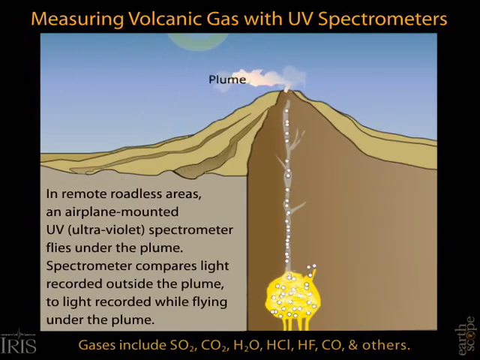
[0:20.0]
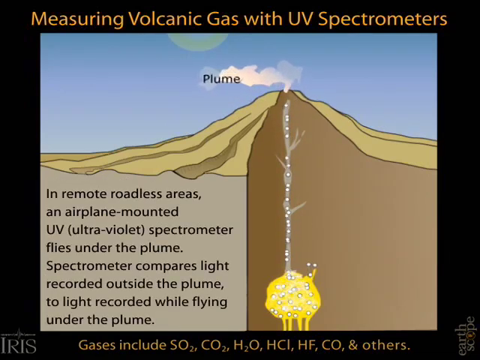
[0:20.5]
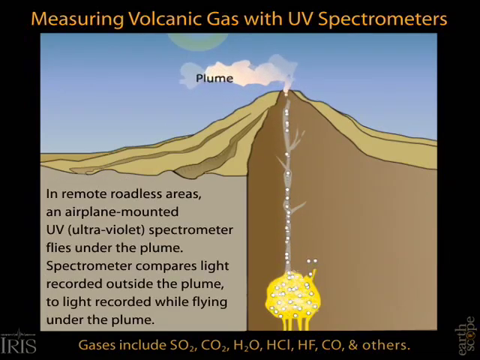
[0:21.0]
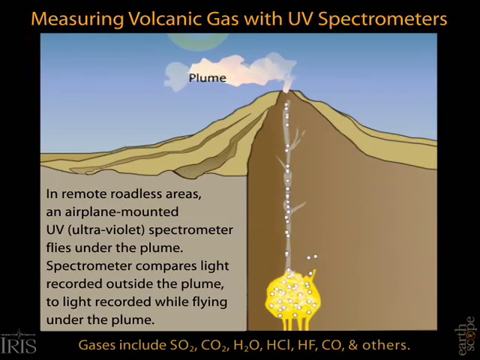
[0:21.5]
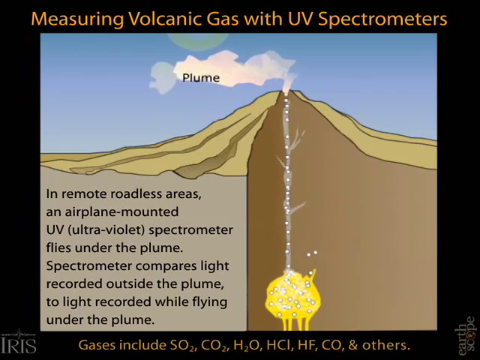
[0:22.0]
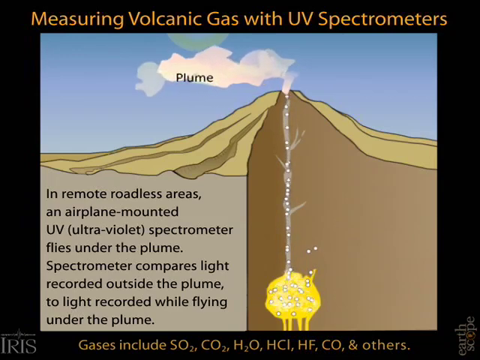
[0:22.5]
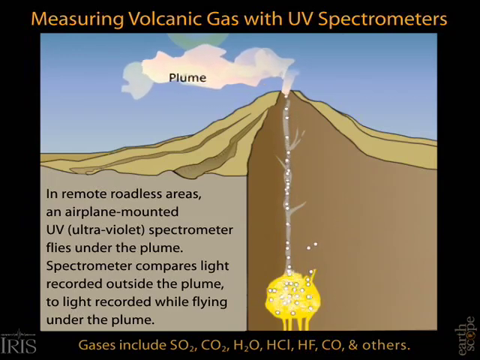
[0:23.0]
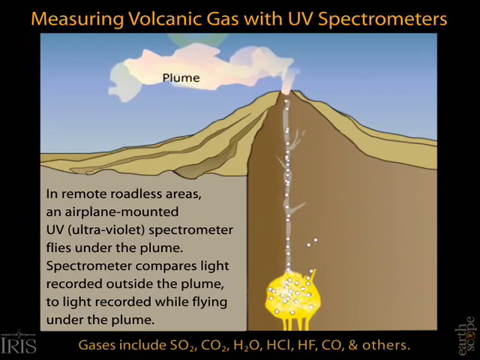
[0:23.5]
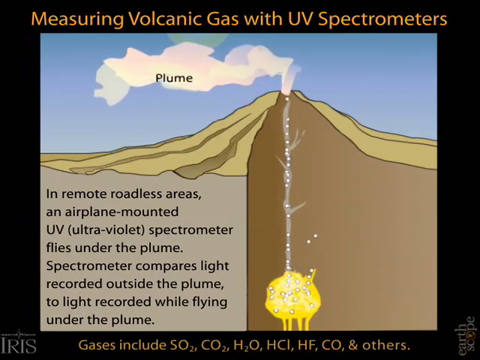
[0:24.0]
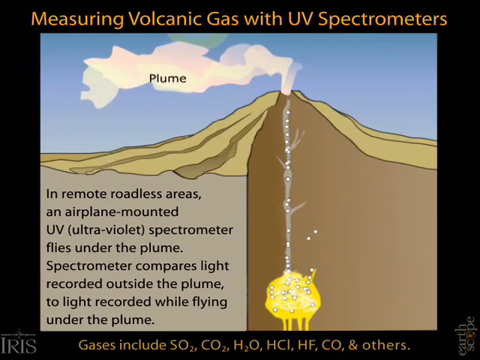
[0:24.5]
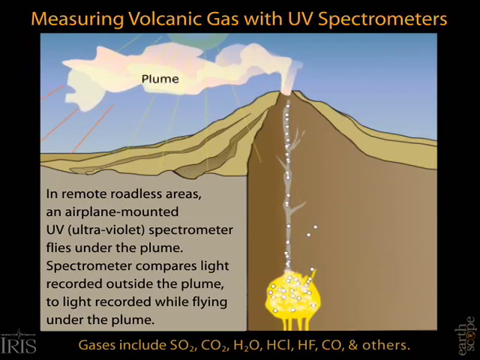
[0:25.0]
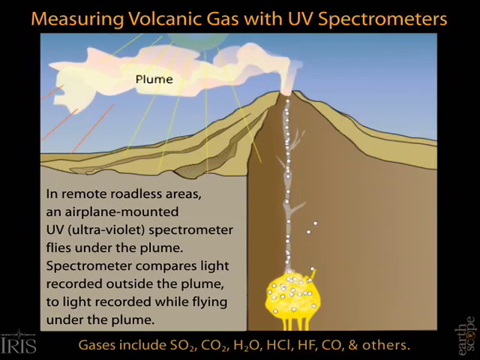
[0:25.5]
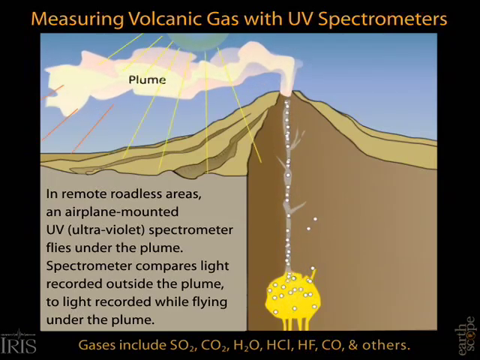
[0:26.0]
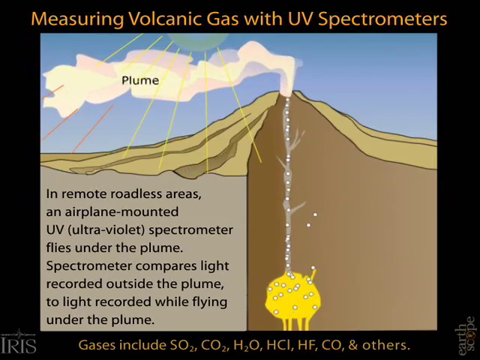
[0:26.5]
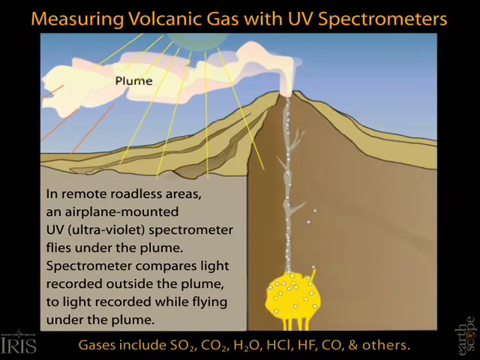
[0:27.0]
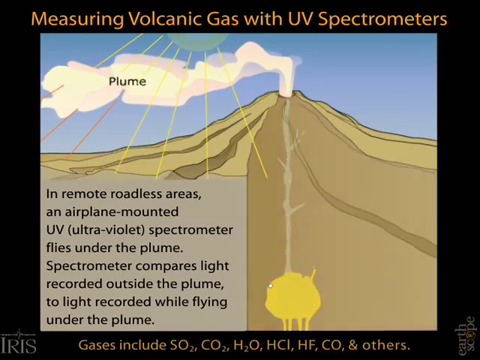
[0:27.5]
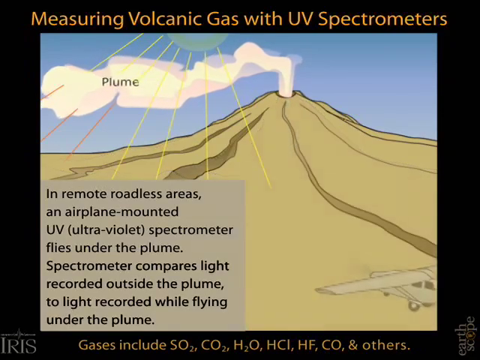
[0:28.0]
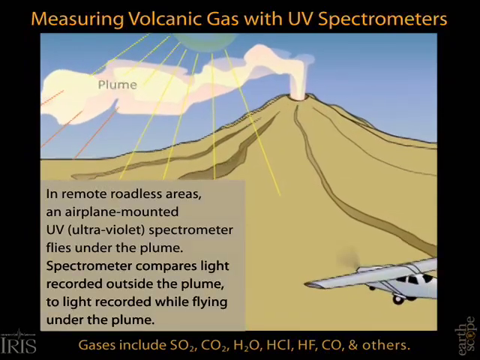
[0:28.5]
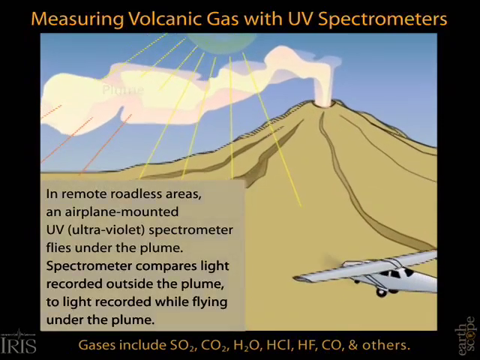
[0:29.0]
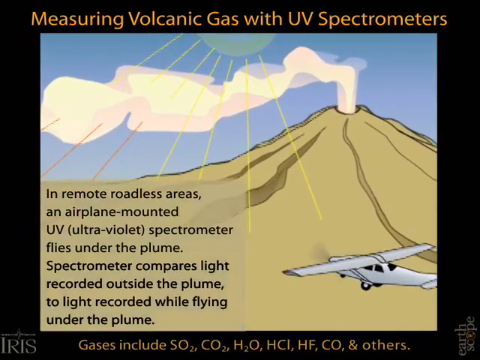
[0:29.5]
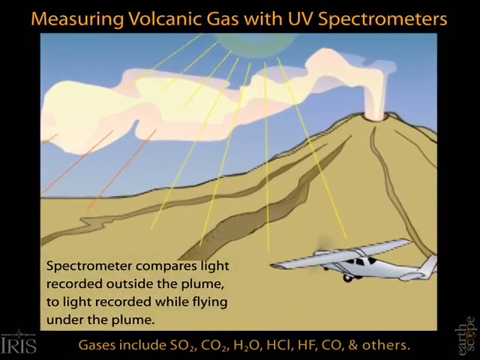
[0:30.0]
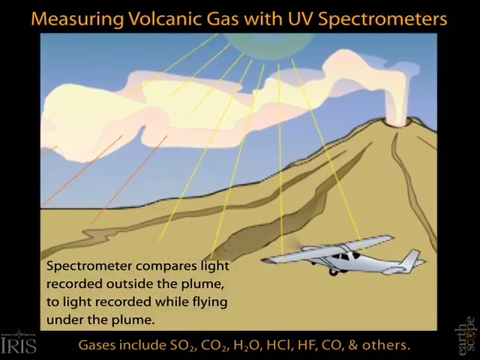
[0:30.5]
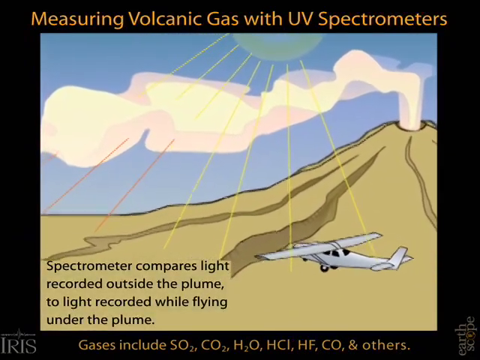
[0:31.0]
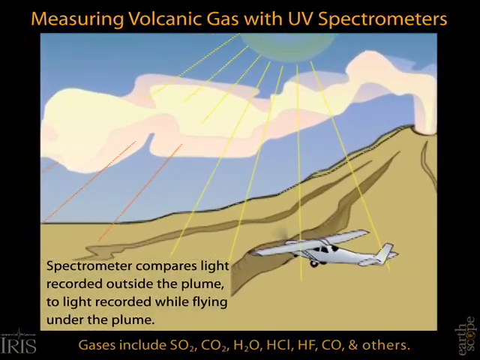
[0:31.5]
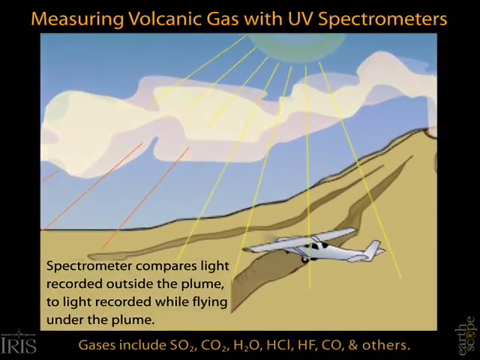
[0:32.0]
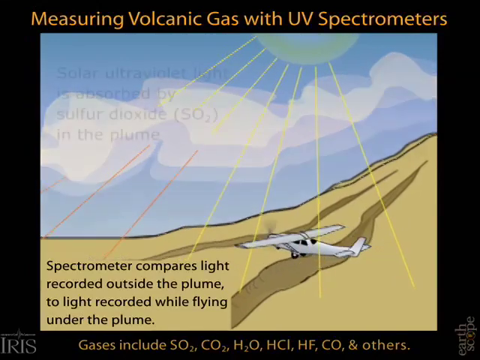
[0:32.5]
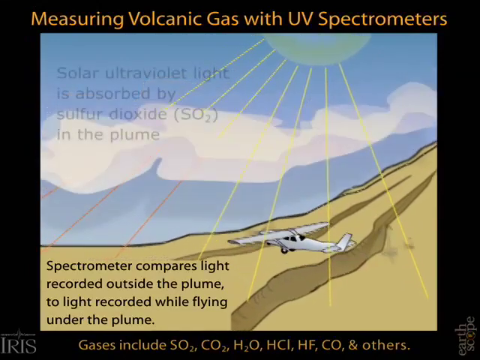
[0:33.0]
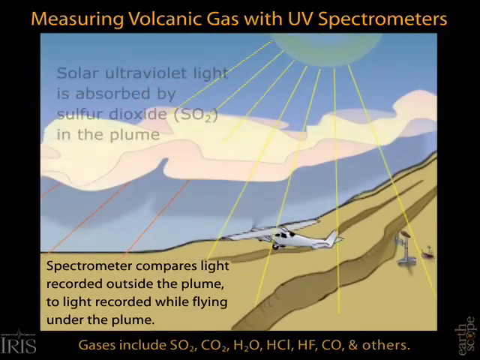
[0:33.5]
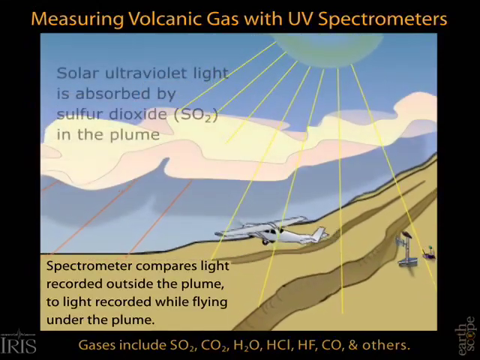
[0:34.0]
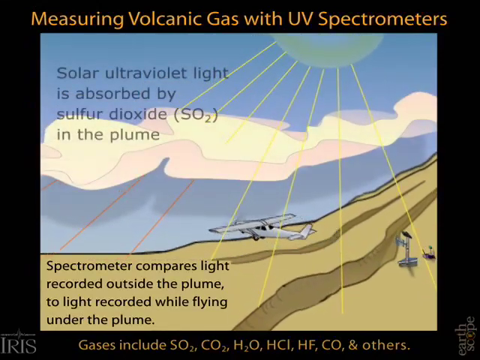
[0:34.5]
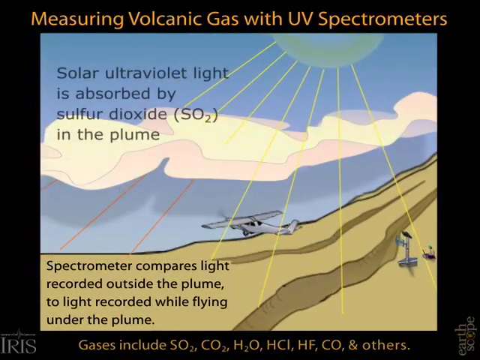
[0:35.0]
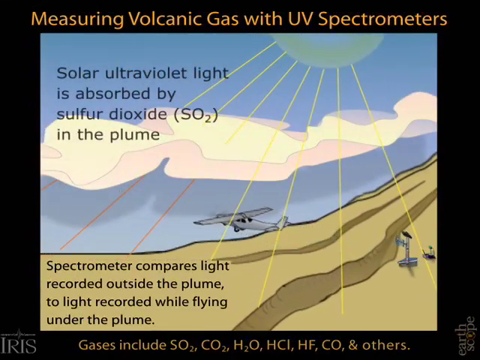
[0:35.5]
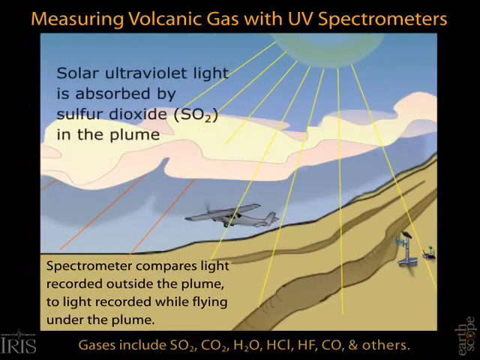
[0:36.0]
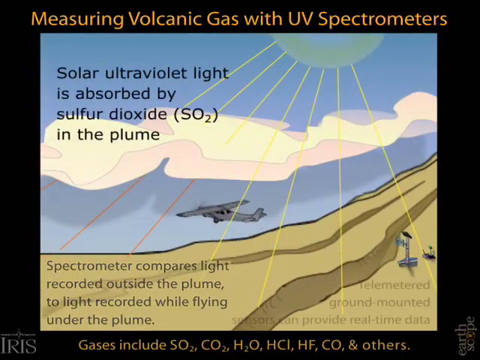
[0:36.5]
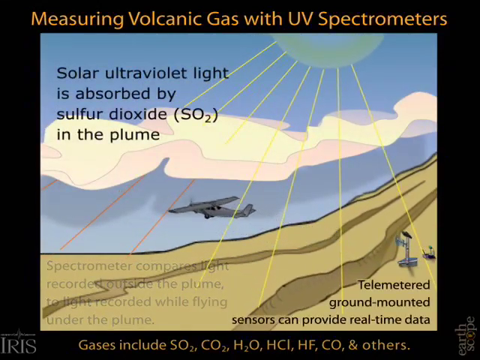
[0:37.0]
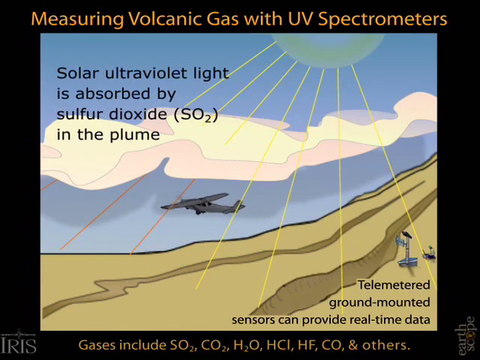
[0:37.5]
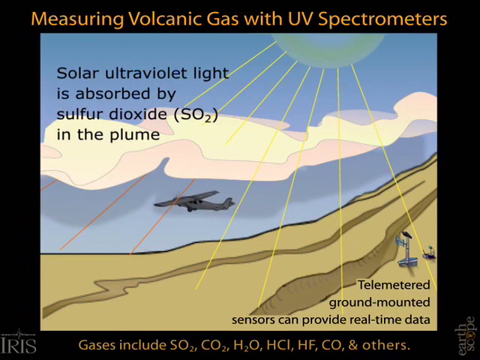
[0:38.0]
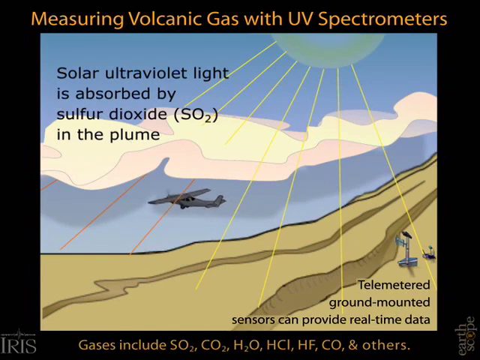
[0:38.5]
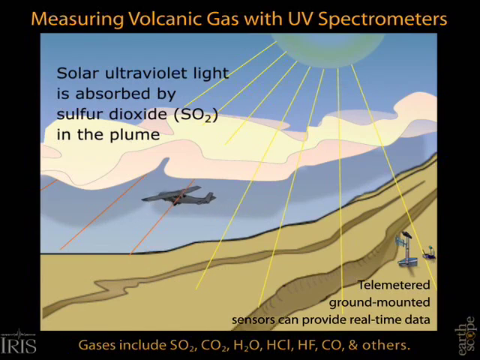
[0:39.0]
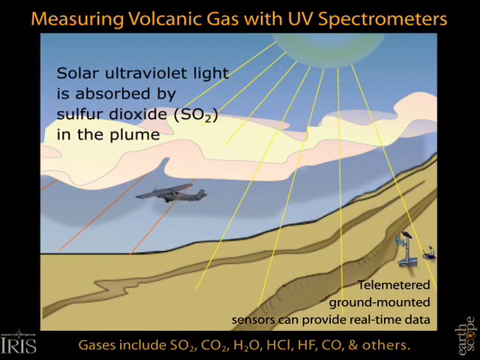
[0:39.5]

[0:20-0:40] An animated diagram shows a volcano outdoors, with the sun shining down on its top and a clear blue sky. A plume of steam rises from the center of the volcano, which is drawn to give a view of its inside. A skinny chamber runs down the middle into the earth, with a few small branches coming off it, and ends at a collection of magma containing bubbles, shown as small white structures traveling up the chamber. The plume is labeled in black text. An information paragraph to the left of the volcano chamber mentions an "airplane mounted UV ultraviolet spectrometer flies under the plume" and states "Spectrometer compares light recorded outside the plume to light recorded while flying under the plume." The plume grows larger as gas rises out of the volcano, and a small animated white airplane flies toward the plume.